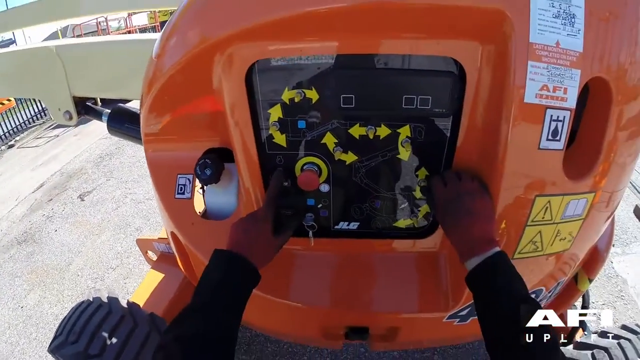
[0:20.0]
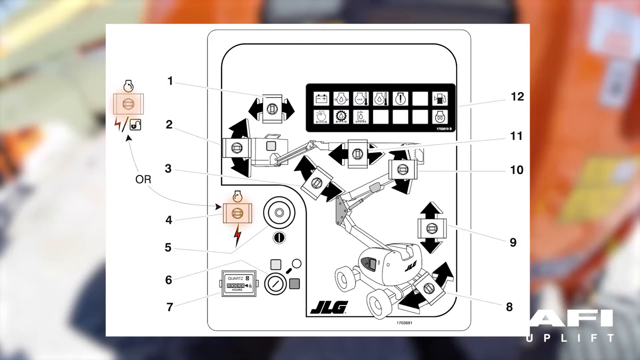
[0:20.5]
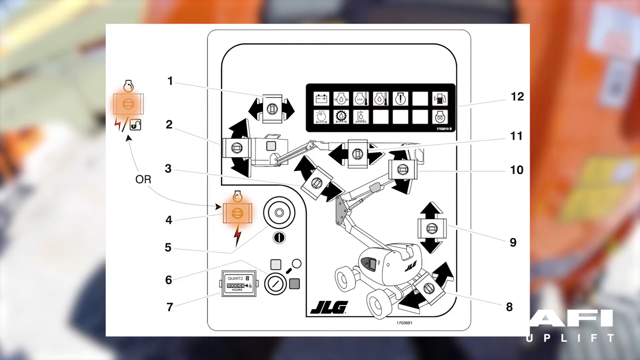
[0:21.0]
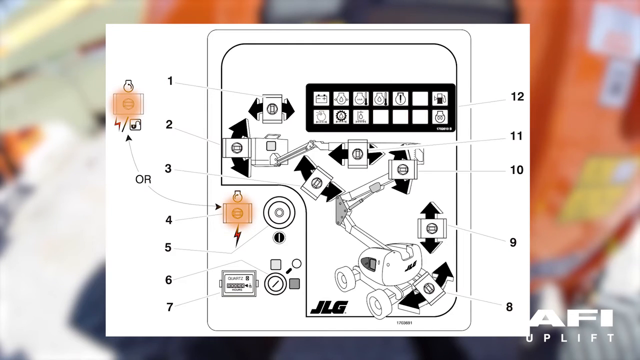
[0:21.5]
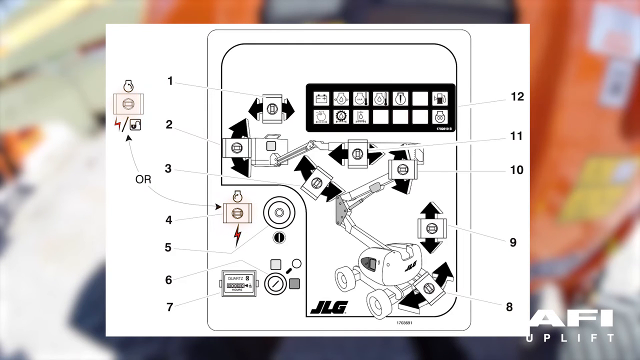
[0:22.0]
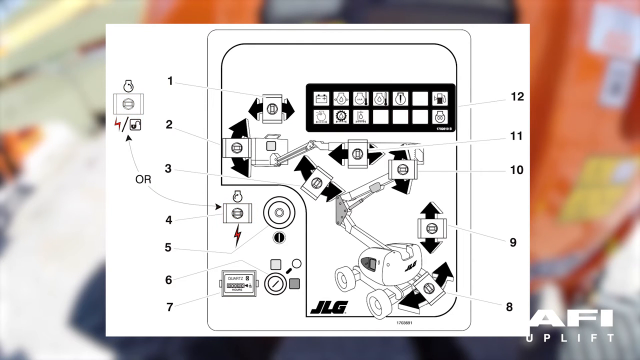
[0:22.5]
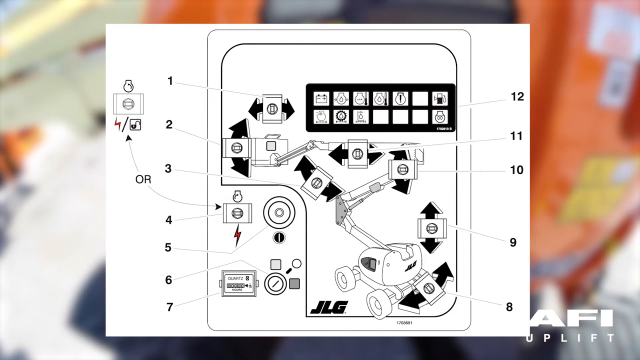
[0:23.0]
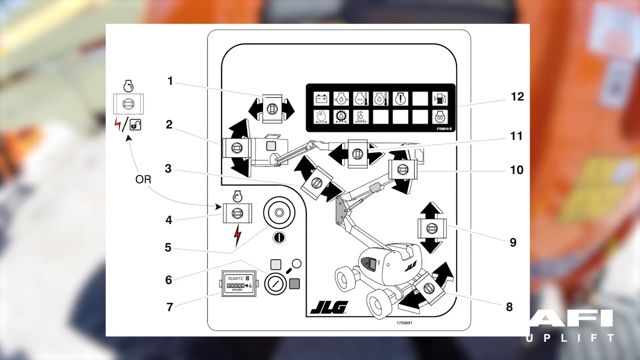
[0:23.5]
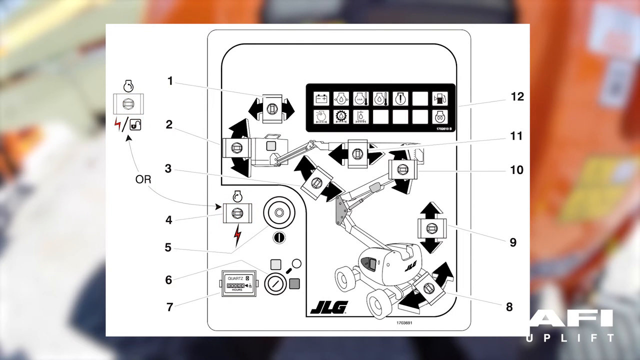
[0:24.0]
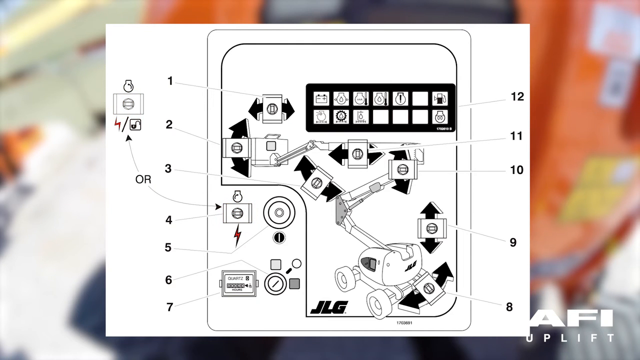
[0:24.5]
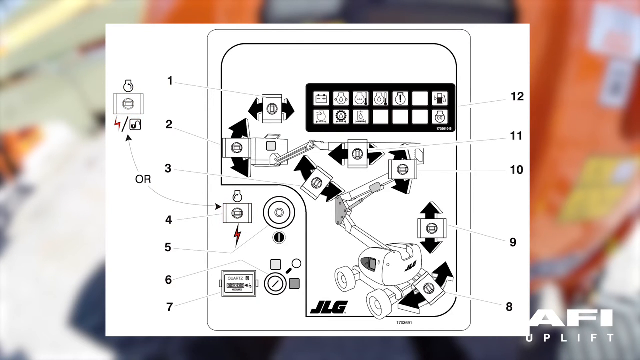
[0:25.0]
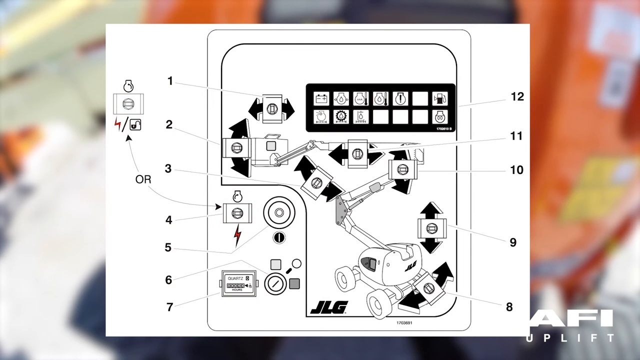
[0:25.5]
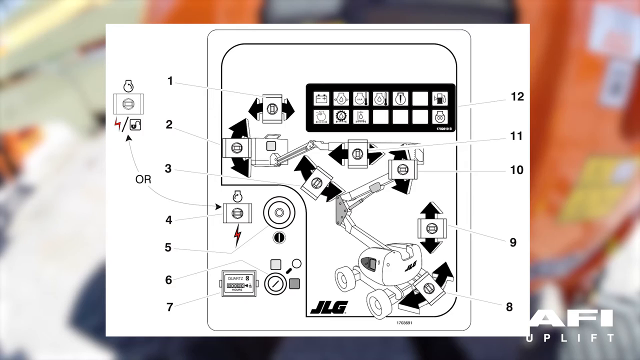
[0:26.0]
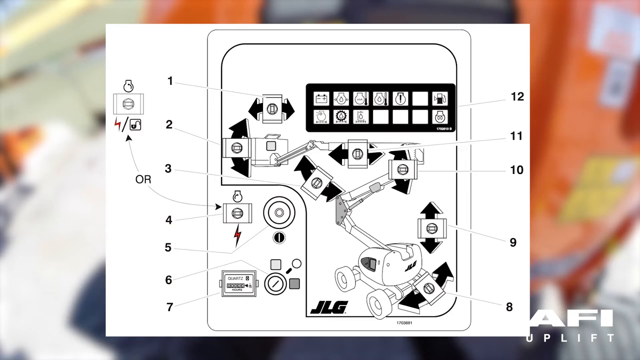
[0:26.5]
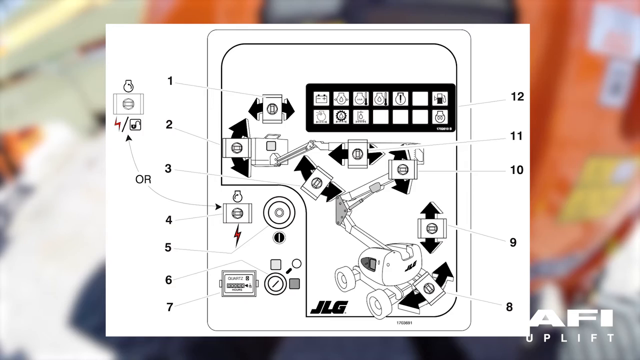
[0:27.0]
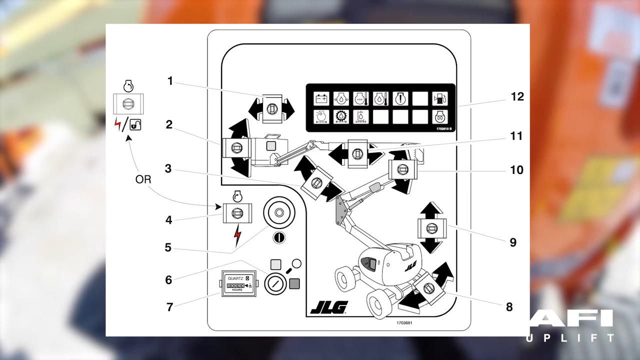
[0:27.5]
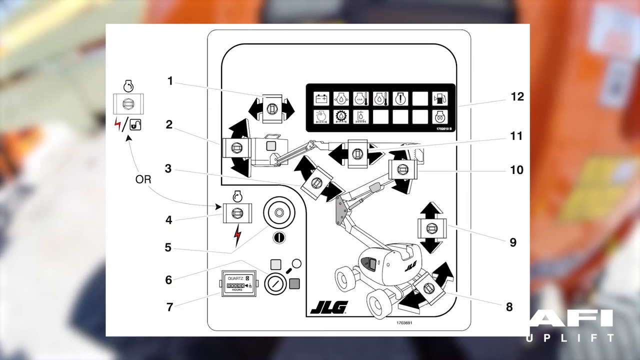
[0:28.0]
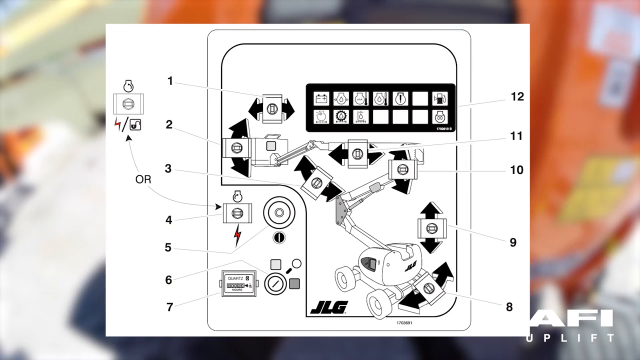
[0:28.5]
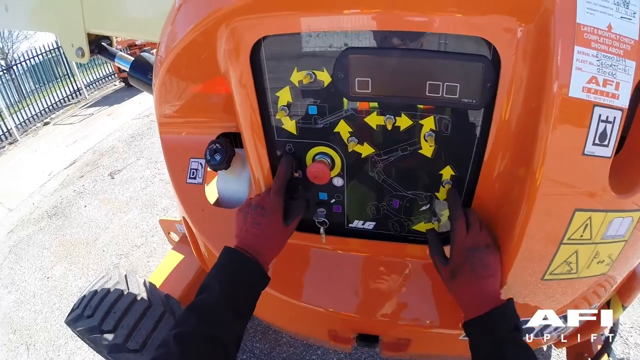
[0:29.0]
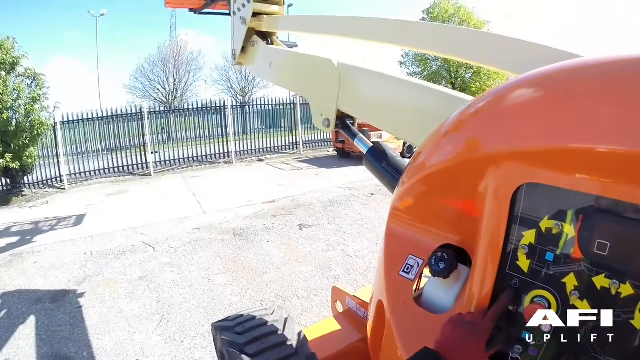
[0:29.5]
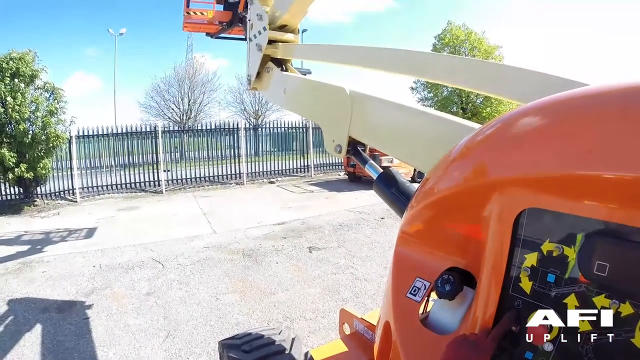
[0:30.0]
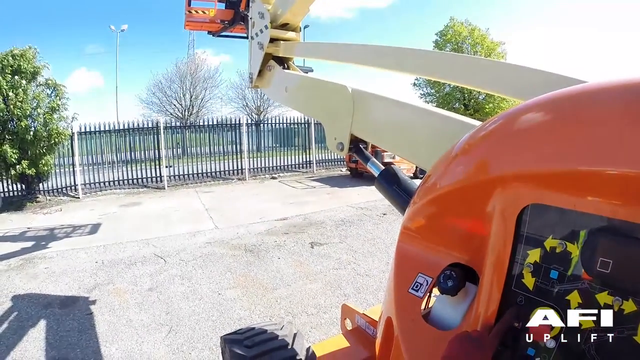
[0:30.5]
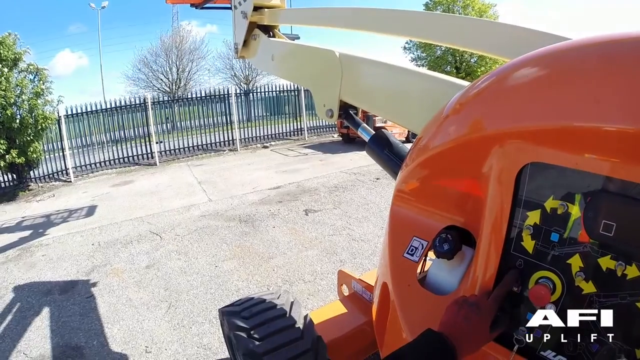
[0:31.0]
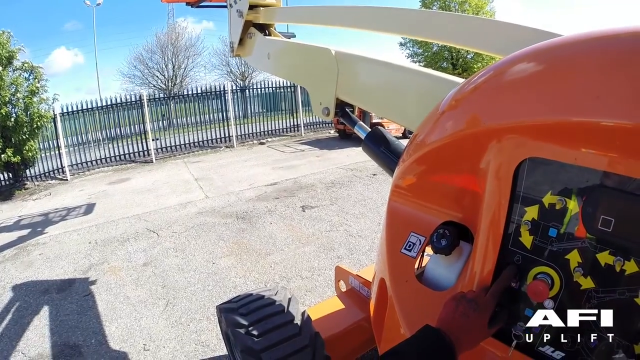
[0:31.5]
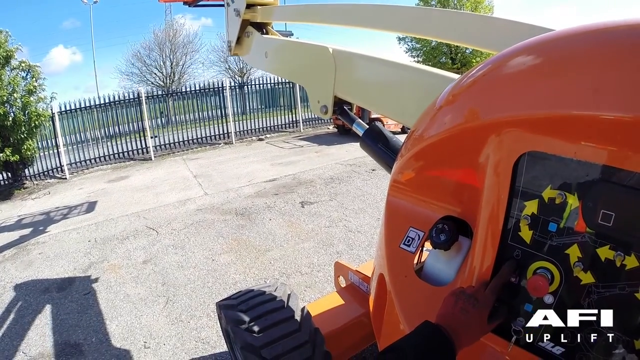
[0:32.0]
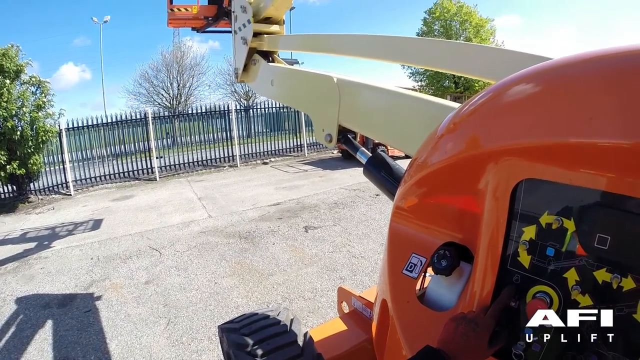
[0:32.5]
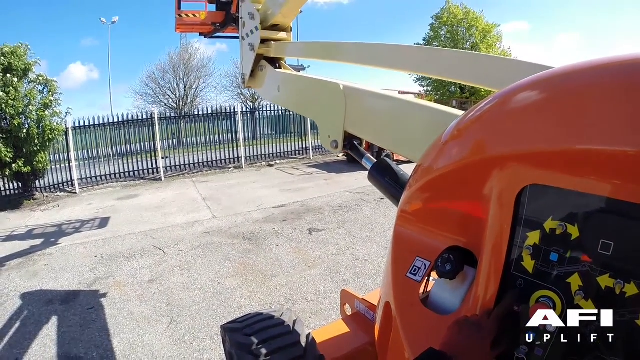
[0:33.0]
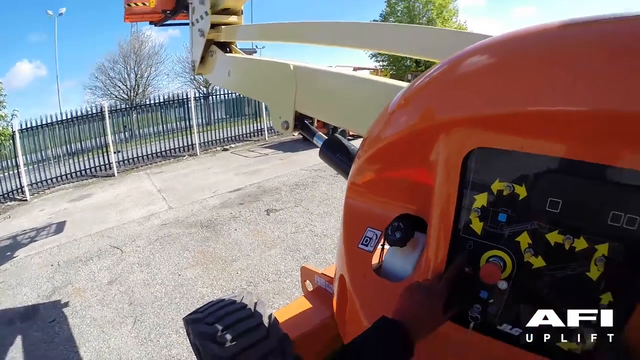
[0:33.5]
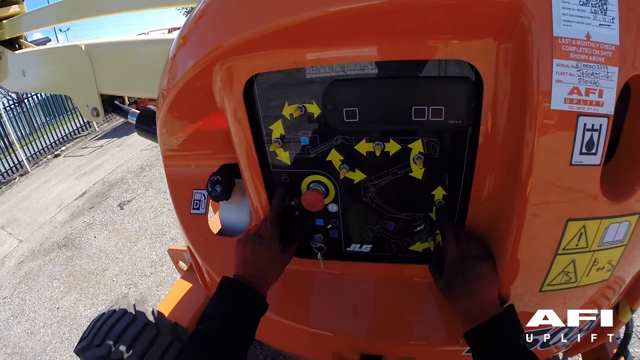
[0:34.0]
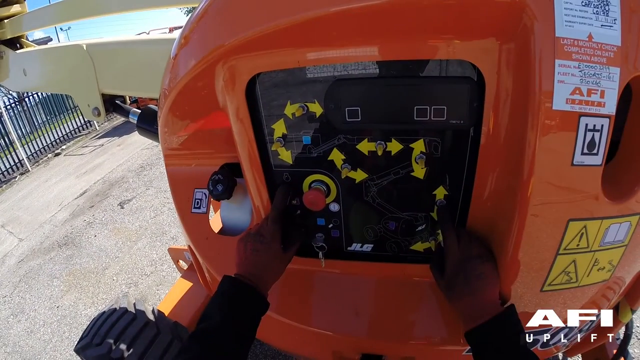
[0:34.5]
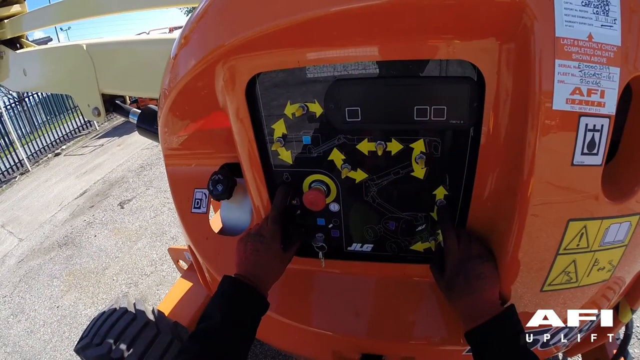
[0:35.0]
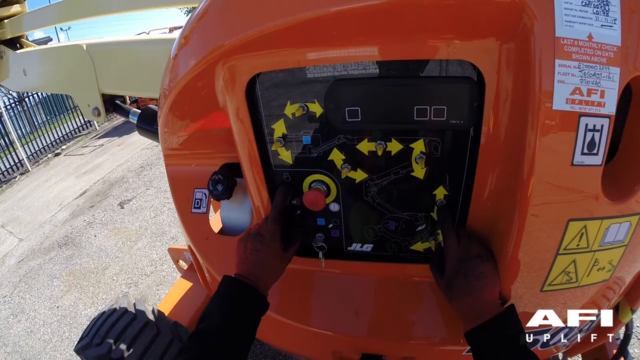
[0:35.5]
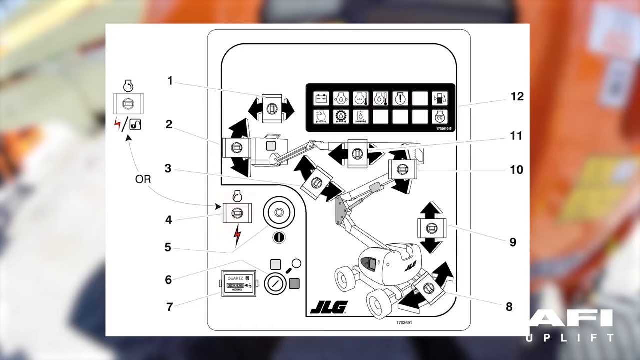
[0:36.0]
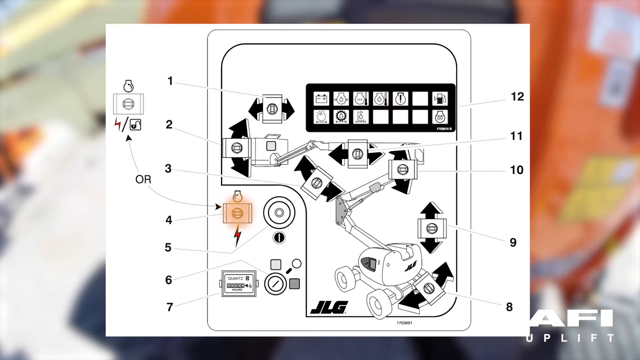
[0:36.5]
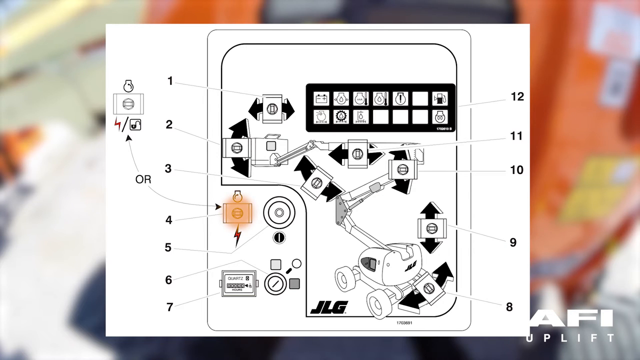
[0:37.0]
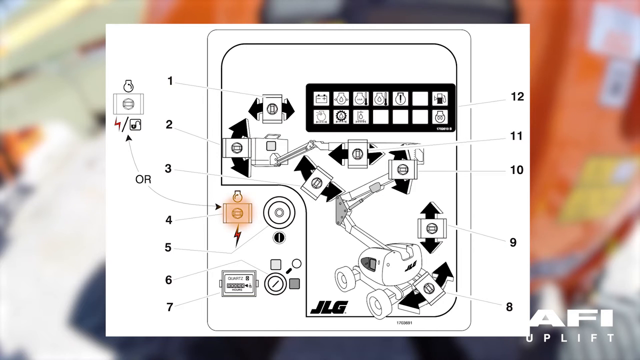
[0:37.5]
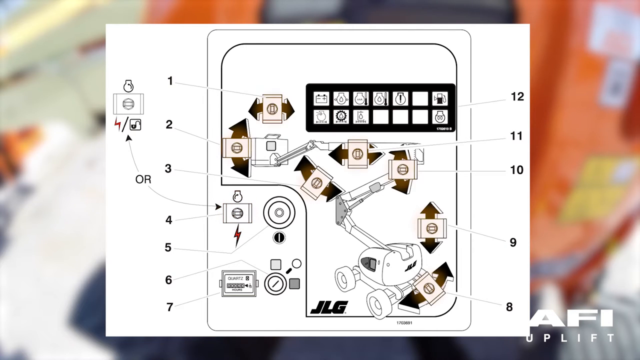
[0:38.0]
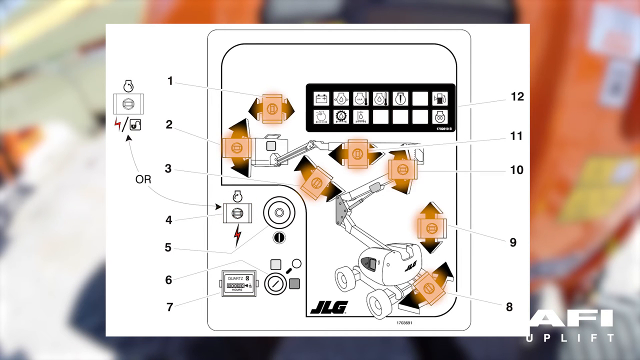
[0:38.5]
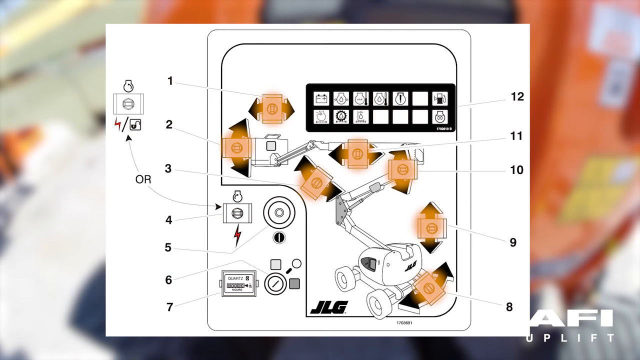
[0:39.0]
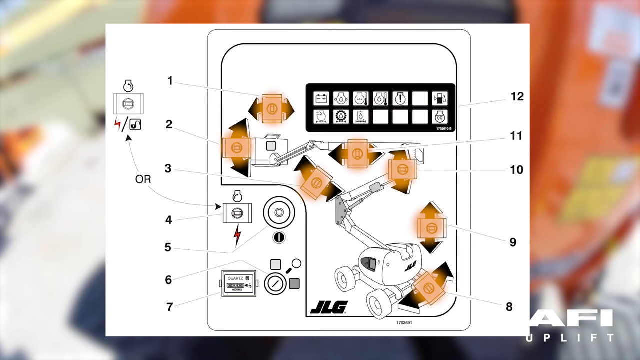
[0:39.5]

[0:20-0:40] The video covers how many ways the machine can be controlled and how it should be moved in compact areas. Someone demonstrates the machine, showing the safety precautions needed to operate it. The machine looks complicated, and the operator seems to know what they are doing.